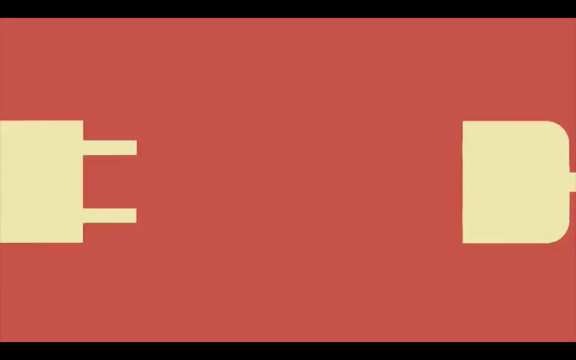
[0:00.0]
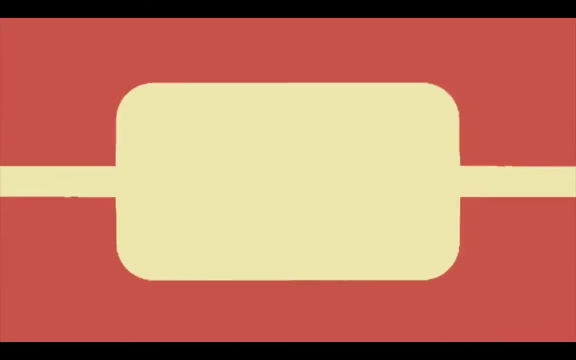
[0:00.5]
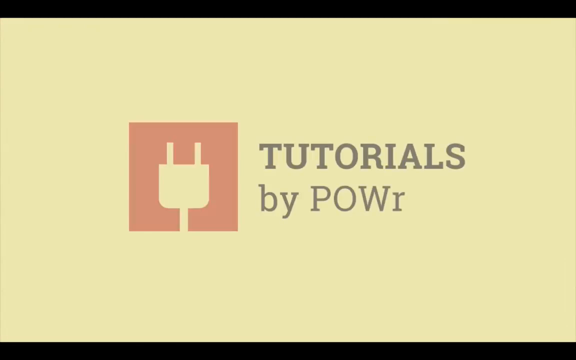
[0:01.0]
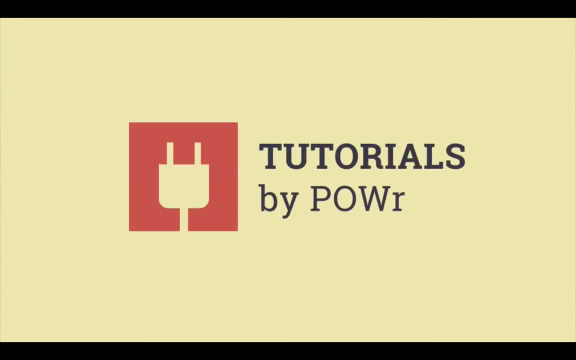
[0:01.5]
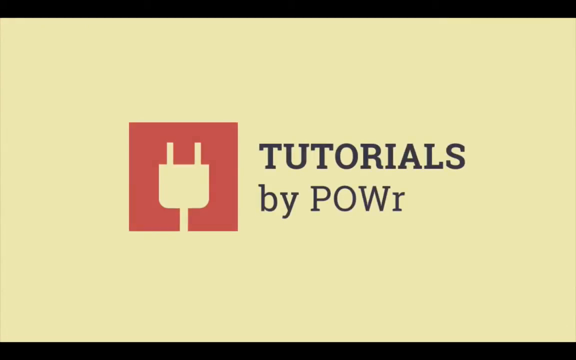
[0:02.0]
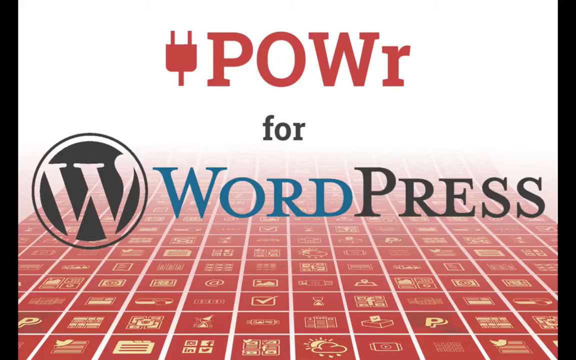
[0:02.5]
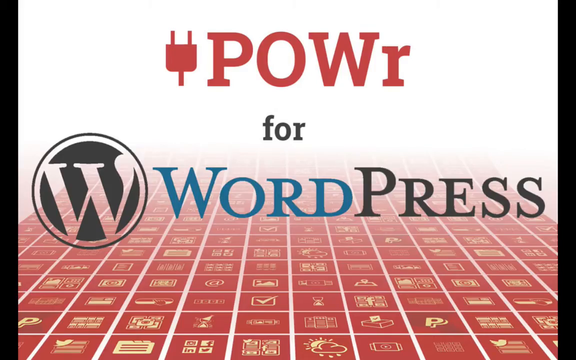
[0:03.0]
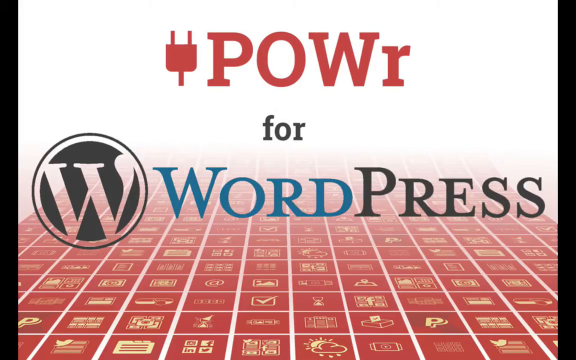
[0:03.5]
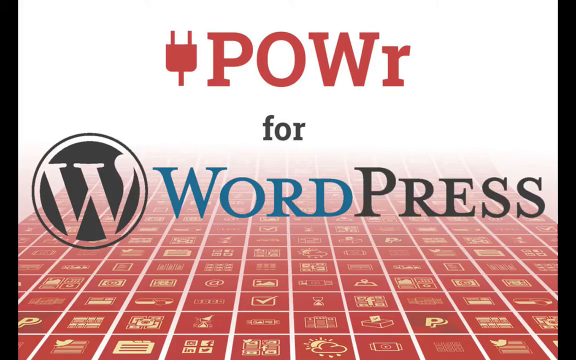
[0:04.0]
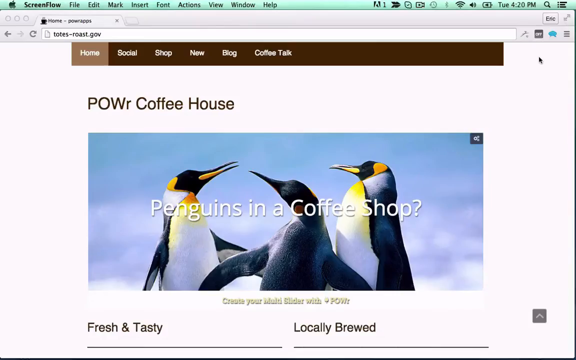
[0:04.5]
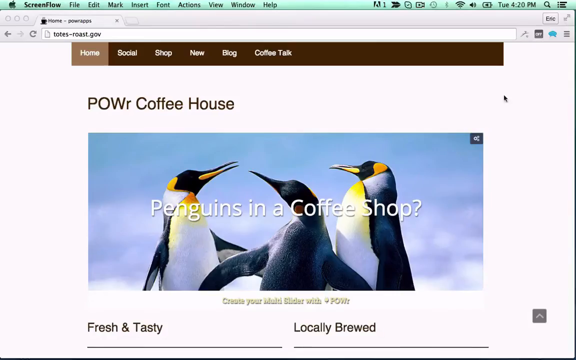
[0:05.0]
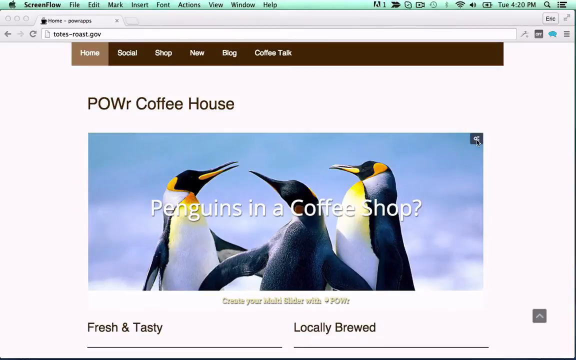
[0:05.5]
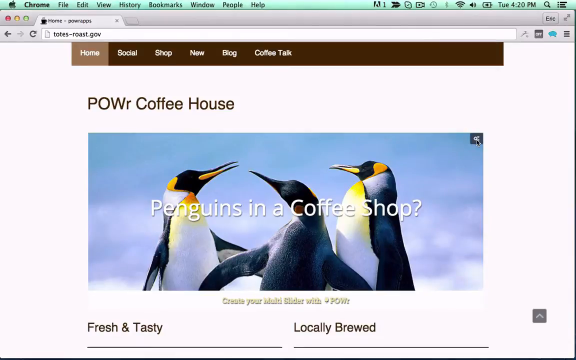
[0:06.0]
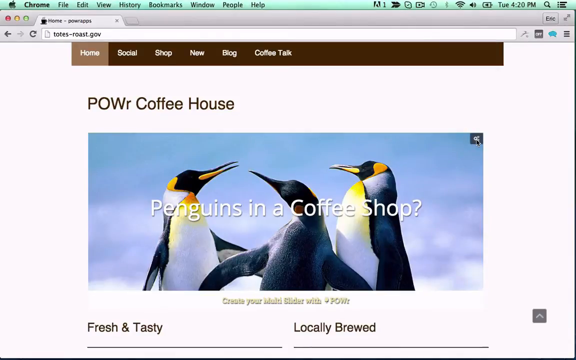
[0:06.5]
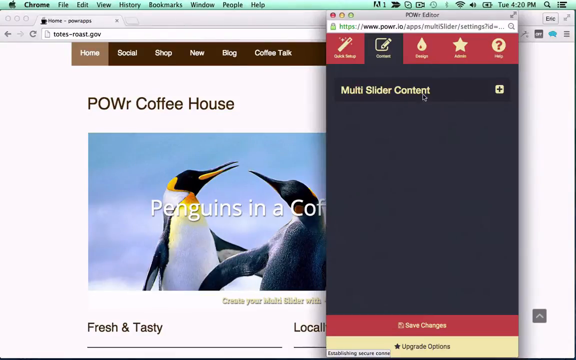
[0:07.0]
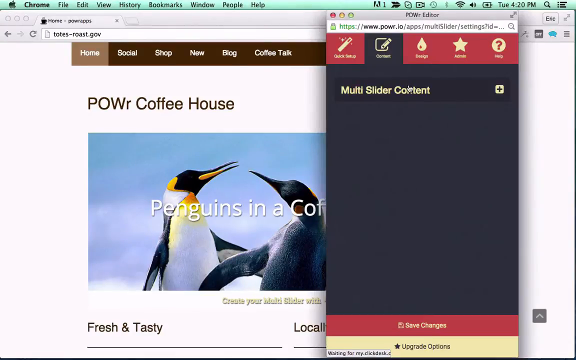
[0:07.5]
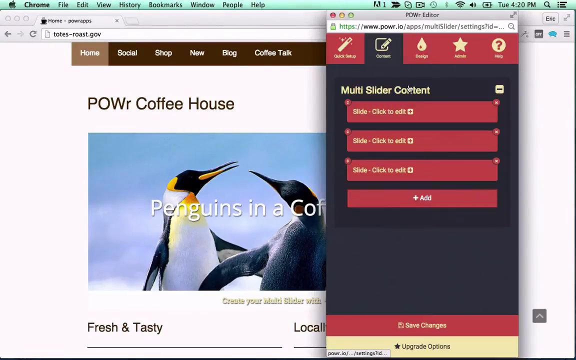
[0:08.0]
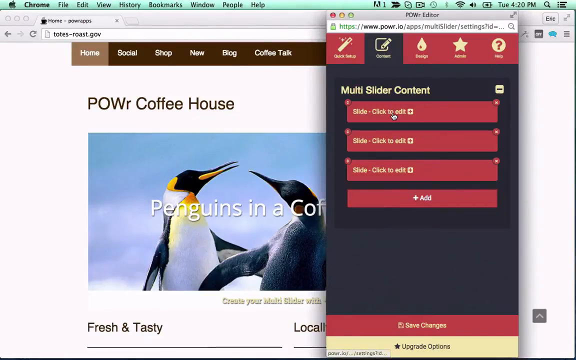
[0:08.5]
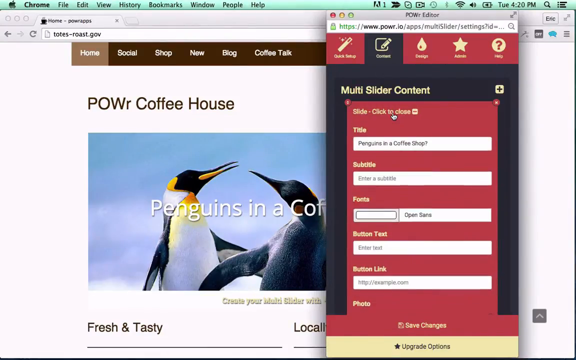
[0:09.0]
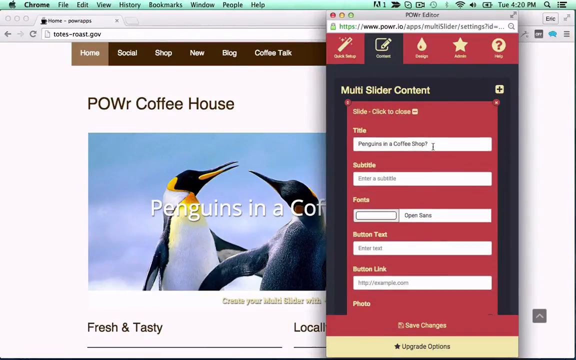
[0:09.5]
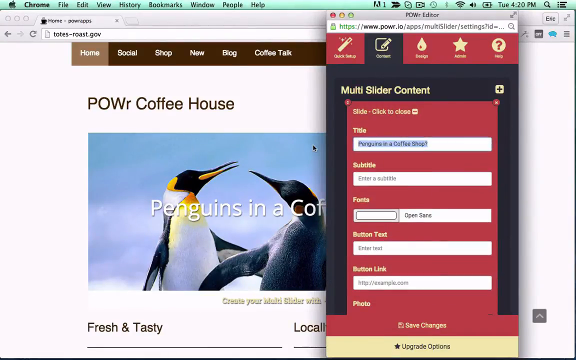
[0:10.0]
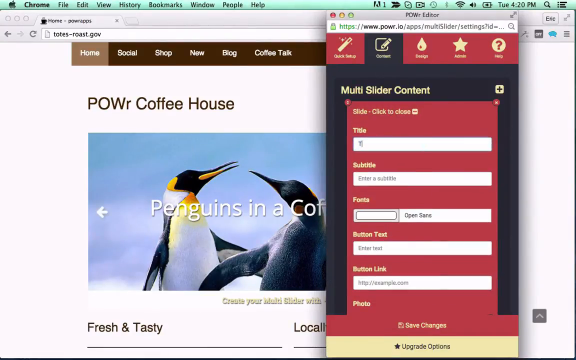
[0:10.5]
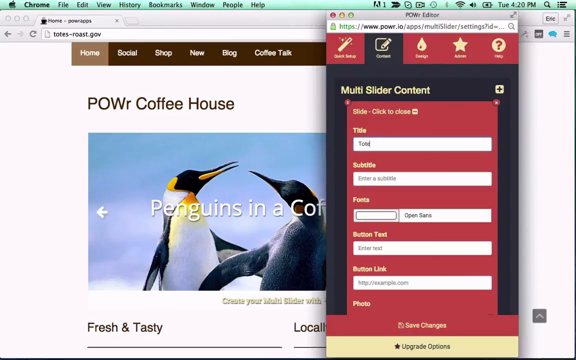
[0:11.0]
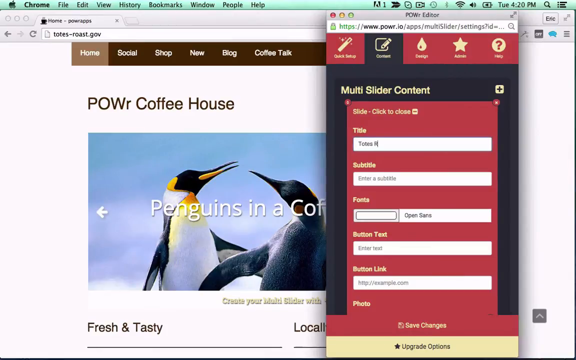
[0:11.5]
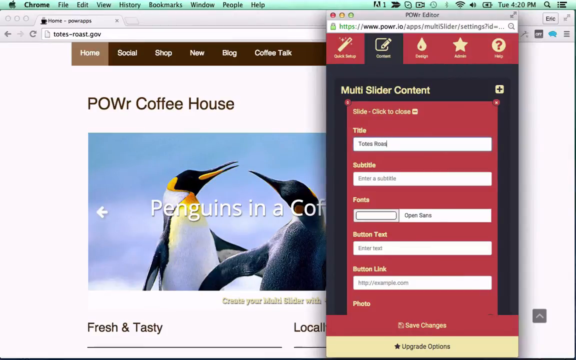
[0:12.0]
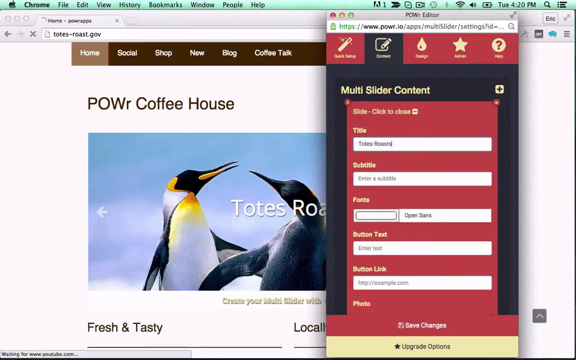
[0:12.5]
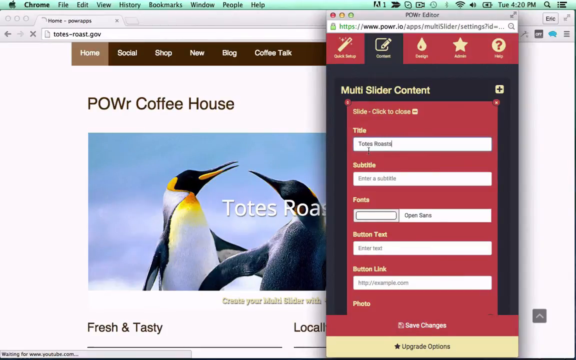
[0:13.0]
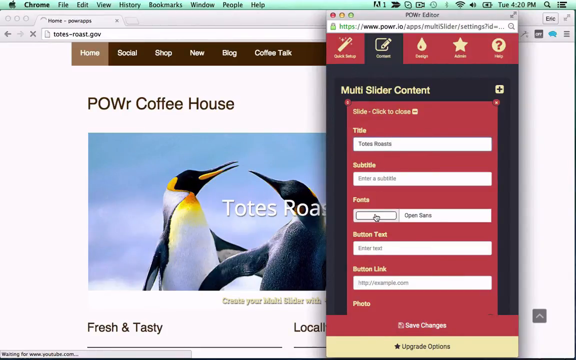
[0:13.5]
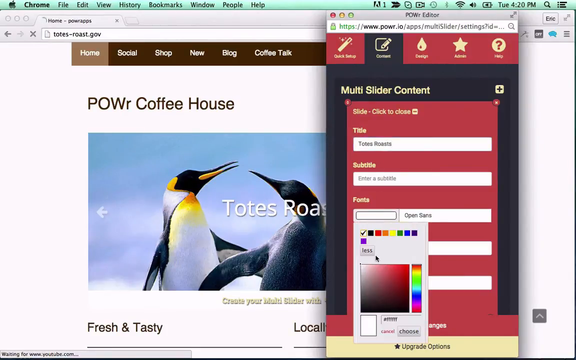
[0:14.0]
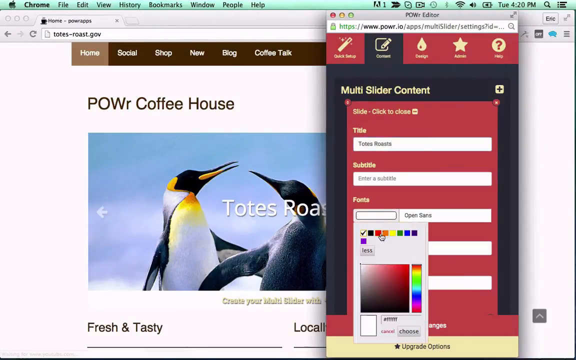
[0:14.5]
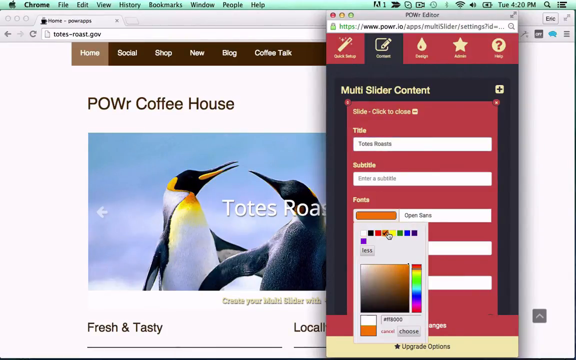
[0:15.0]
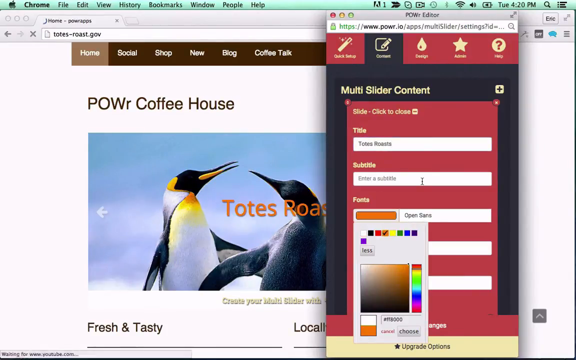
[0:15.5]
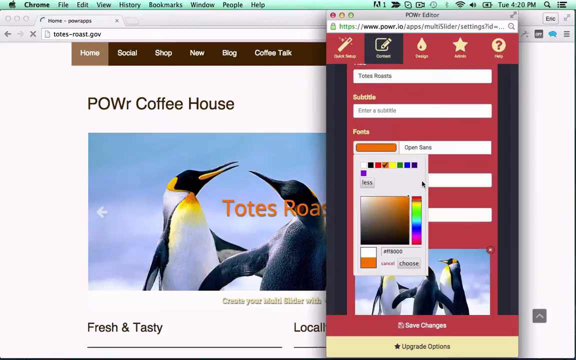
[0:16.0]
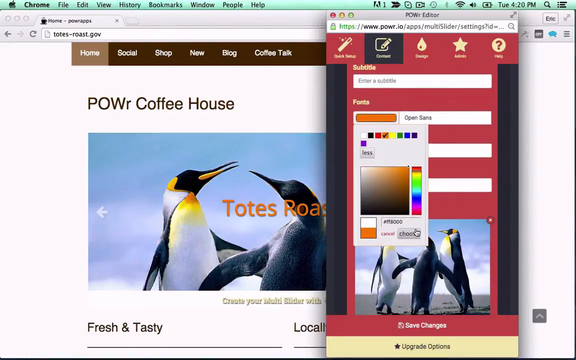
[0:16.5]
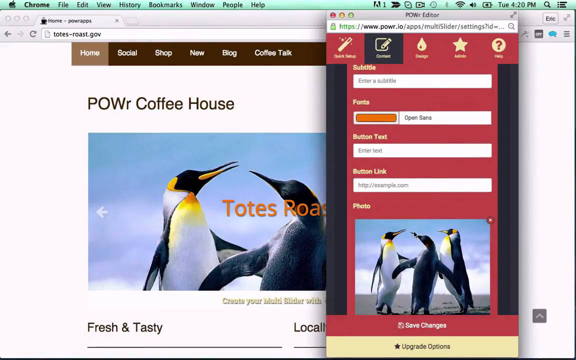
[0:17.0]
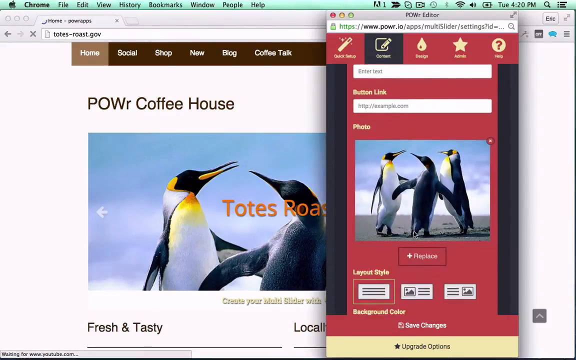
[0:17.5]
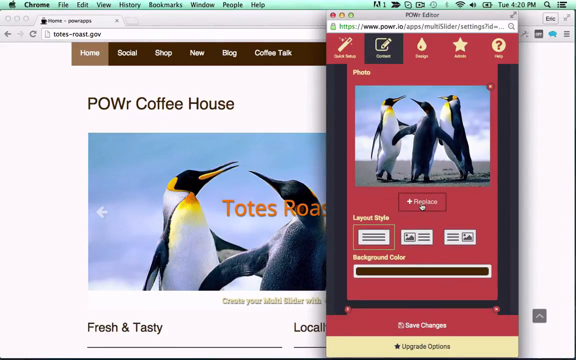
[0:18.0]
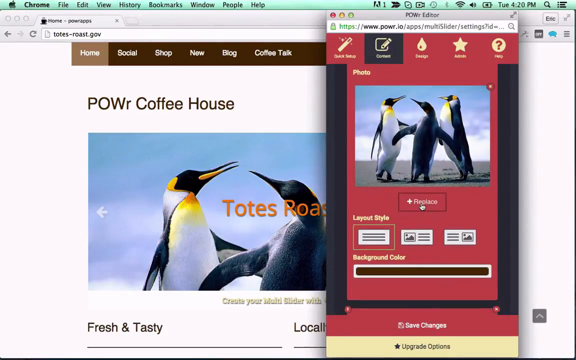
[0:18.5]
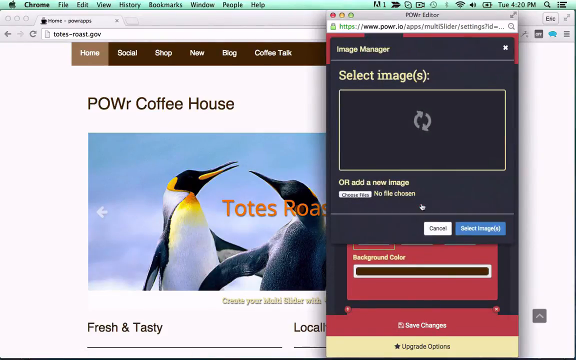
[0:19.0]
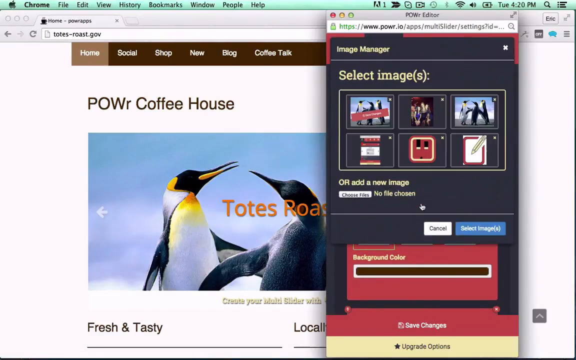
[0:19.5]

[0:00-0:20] A red background holds a very simple image of a plug, or a plug cable, entering a plug socket, in a yellow color. The view zooms in on the connected plug and socket and shows the logo "tutorials by POWr", with POW in capitals and a lowercase r. On the left side is an image of a yellow power cable on a red square background, and there is another image of the "POWr for WordPress" logo, with a grid of different icons below. A screen recording of a MacBook follows: a browser is opened to a website showing an image of three penguins with a caption reading "penguins in a coffee shop". The POWr editor is opened, with several menus at the top, and the content tab is selected. It has different blanks to fill in, such as title and image; the title entered is hard to read, and below it is a subtitle field, along with font, color, photo and layout style options. The website image remains in the background, suggesting the video is apparently showing how to make a website. The title is changed to "totes roasts", and once it is entered the title on the background website changes too.